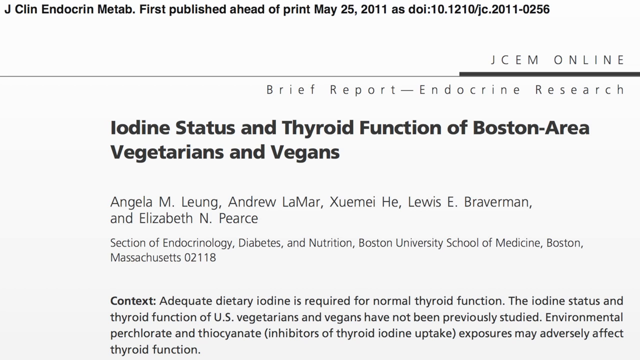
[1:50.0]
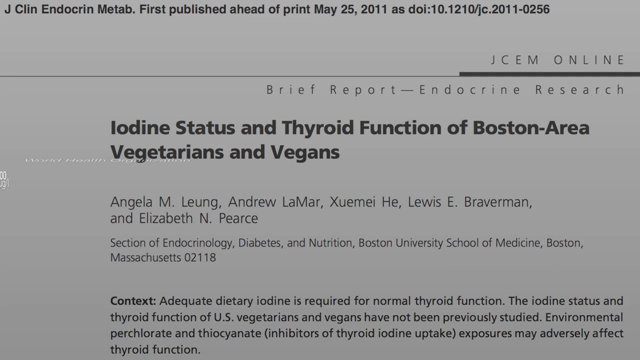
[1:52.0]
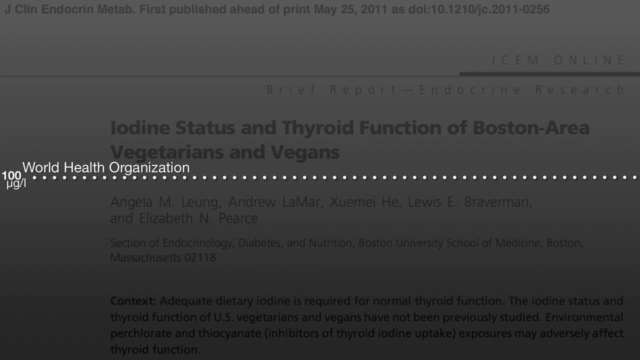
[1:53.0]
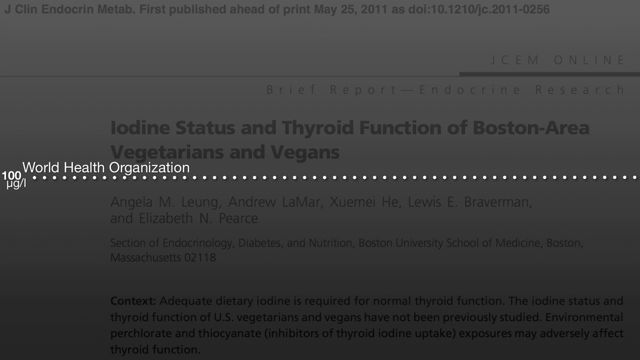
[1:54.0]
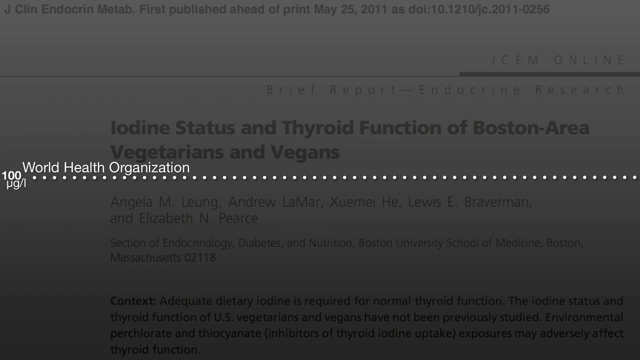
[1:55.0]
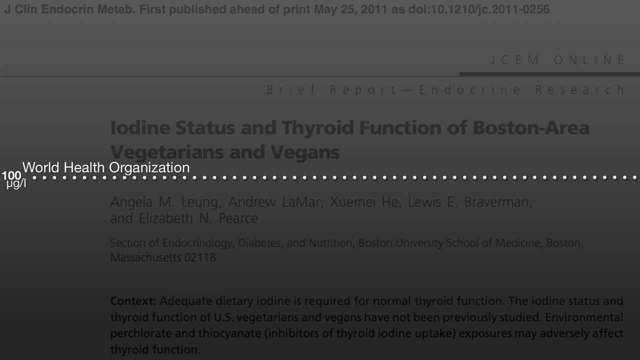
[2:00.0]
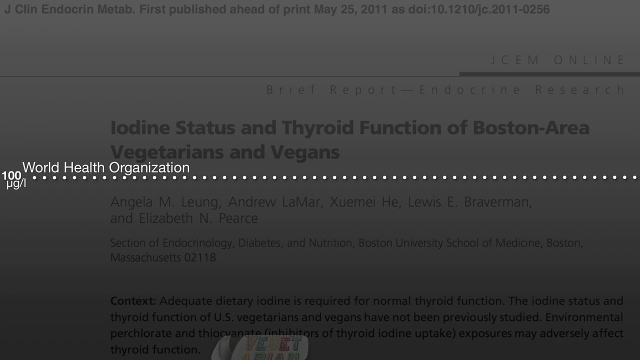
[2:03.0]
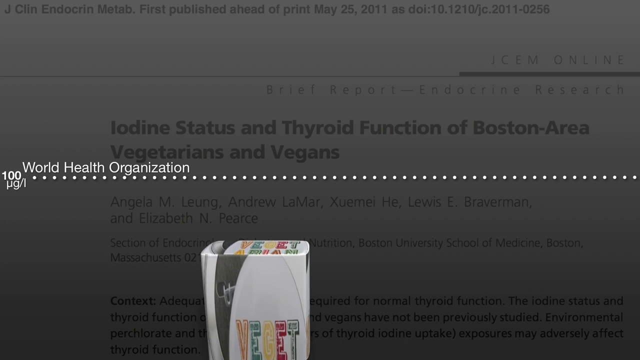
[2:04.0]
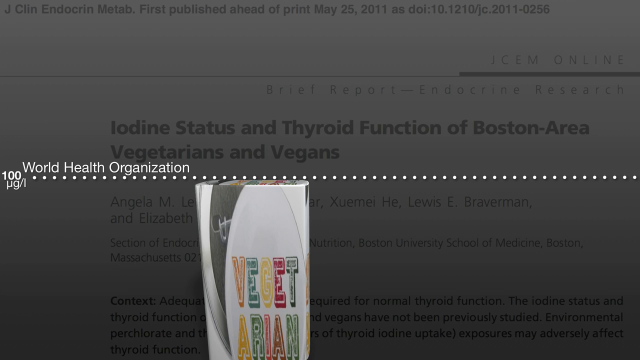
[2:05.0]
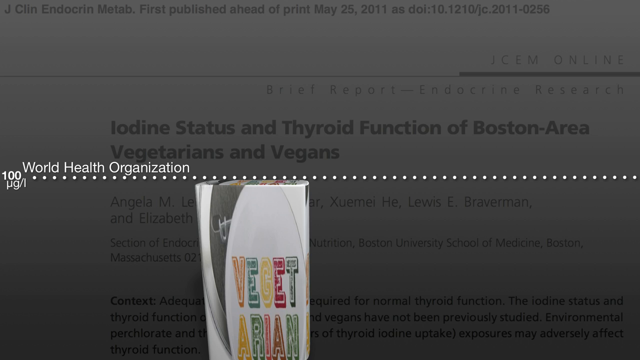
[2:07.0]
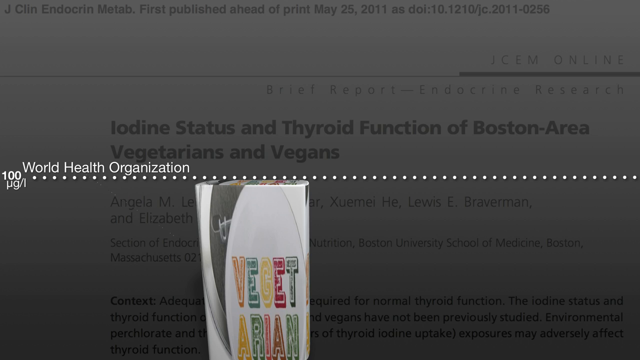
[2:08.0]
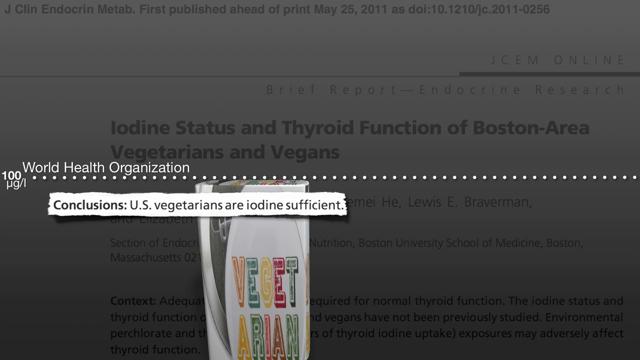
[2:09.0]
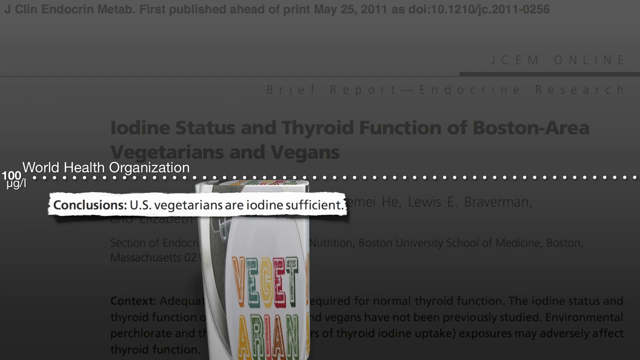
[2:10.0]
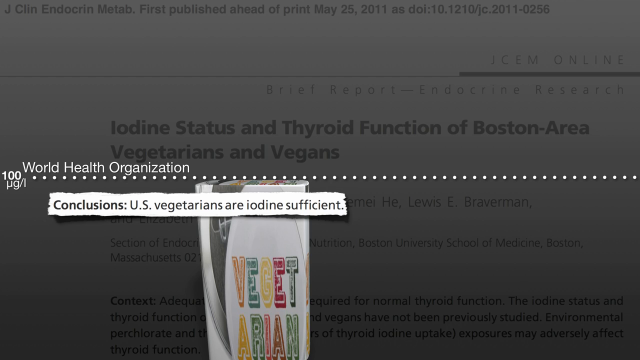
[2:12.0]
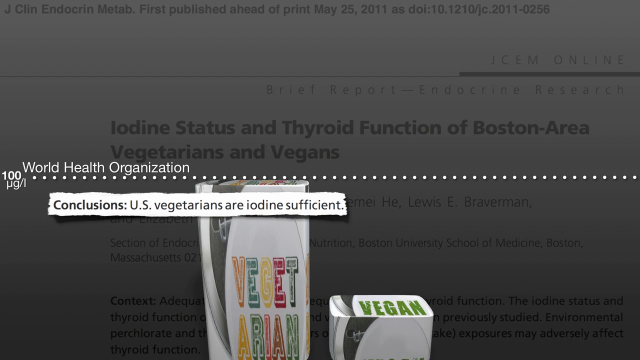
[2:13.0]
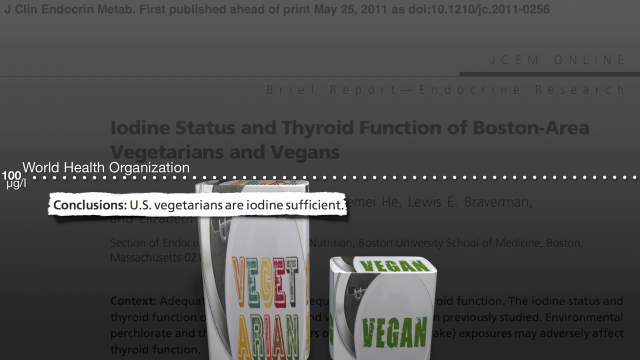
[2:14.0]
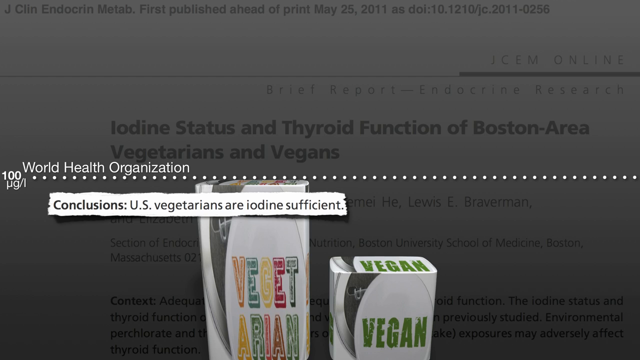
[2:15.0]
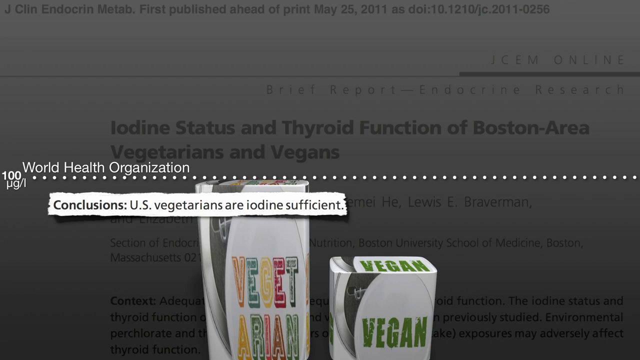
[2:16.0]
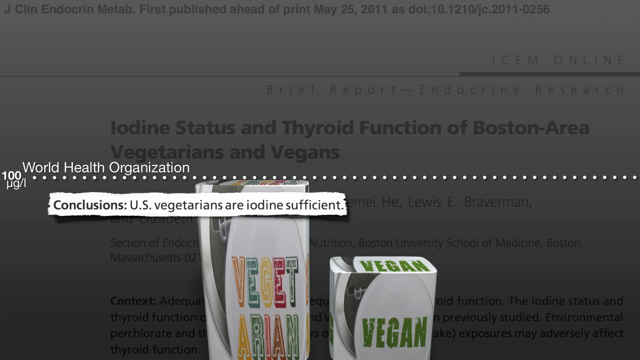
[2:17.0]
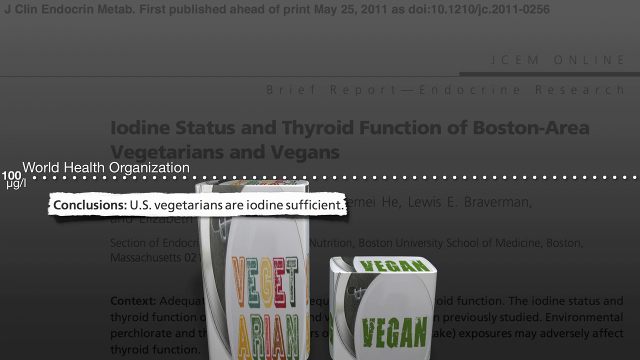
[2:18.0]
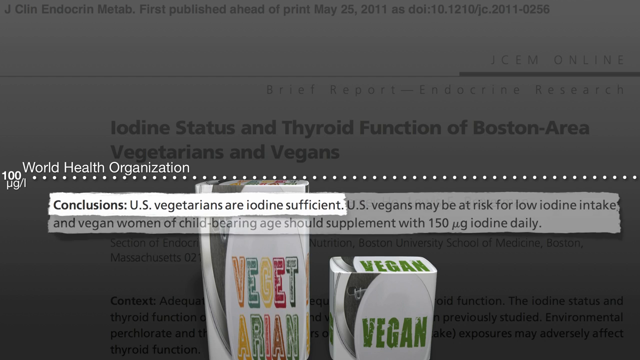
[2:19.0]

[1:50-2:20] The title "iodine status and thyroid function of Boston area vegetarians and vegans" is shown. A dashed line says "World Health Organization" in white across the blacked-out page. Then "conclusions. U.S. vegetarians are iodine sufficient" appears, with a box next to it, and an article shows up, almost like a newspaper article, saying "conclusions, U.S. vegetarians are iodine sufficient." The words on these graphics are multicolored, and the shapes almost look like toilets. The last line that shows up reads "conclusions US vegetarians are iodine sufficient. US vegans may be at risk for low iodine intake and vegan women of childbearing age should supplement with 150 ug iodine daily." "World Health Organization" flashes through and highlights underneath the title about Boston-area vegetarians and vegans, and then unusual graphics of the words vegetarian and vegan appear.